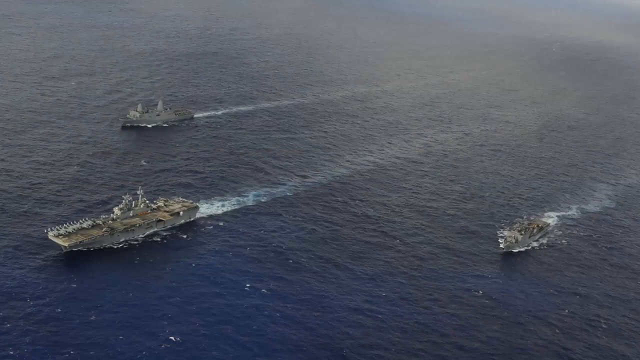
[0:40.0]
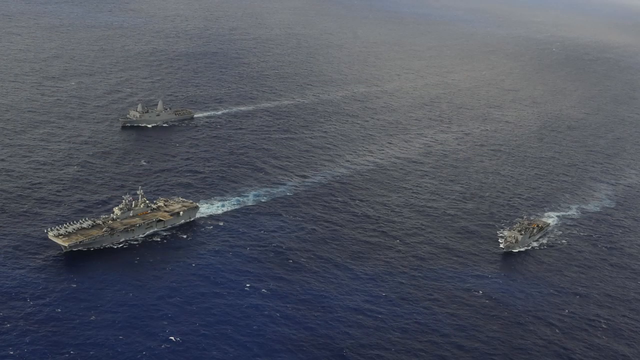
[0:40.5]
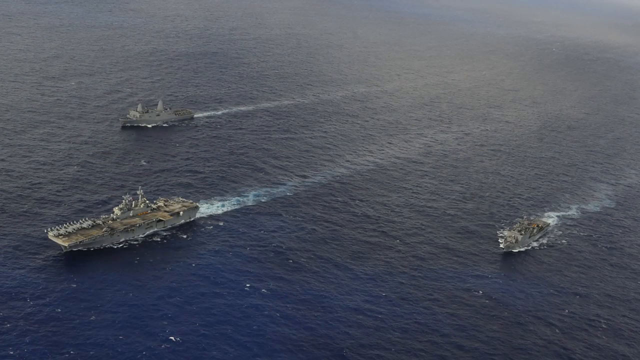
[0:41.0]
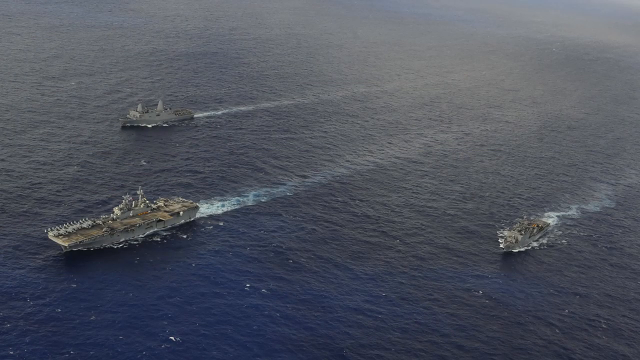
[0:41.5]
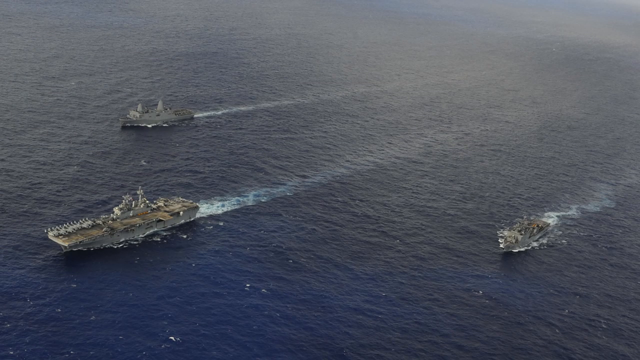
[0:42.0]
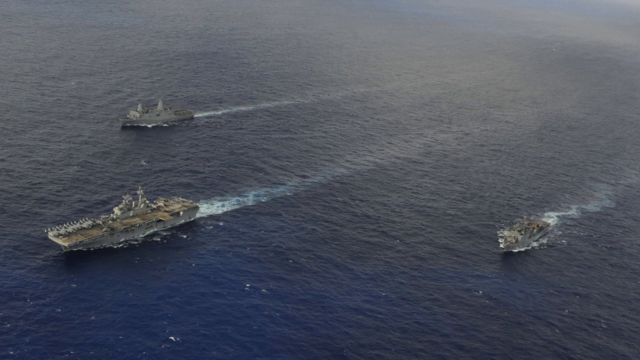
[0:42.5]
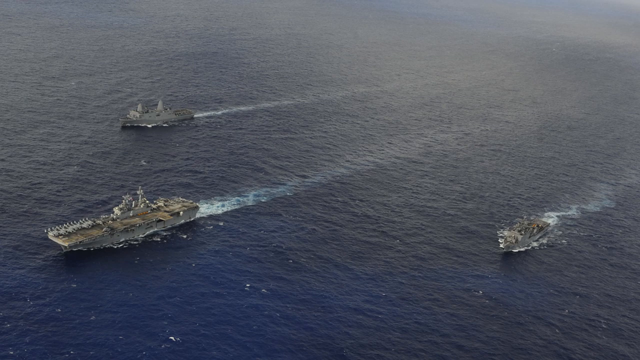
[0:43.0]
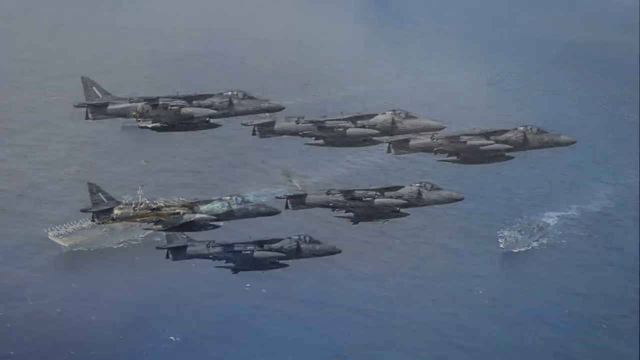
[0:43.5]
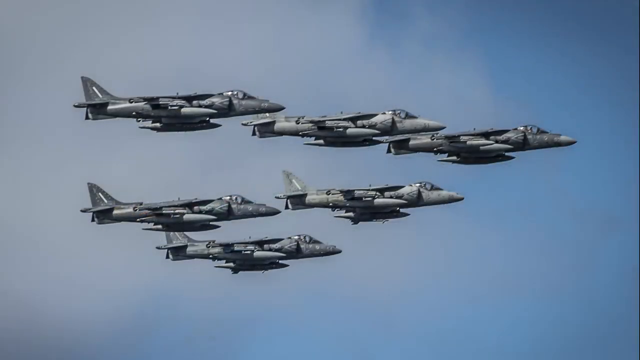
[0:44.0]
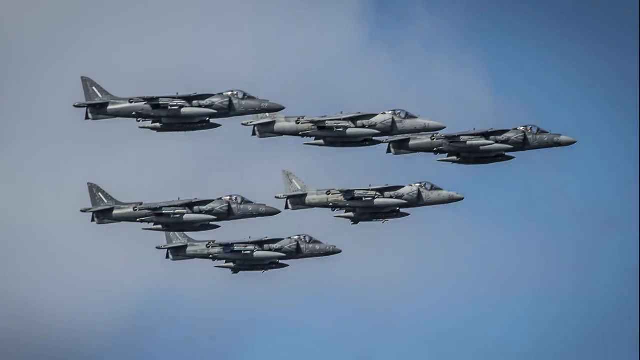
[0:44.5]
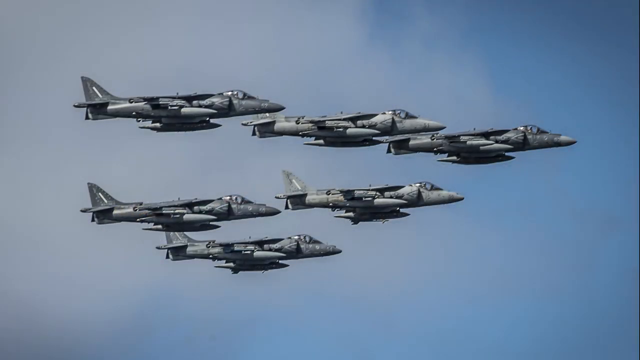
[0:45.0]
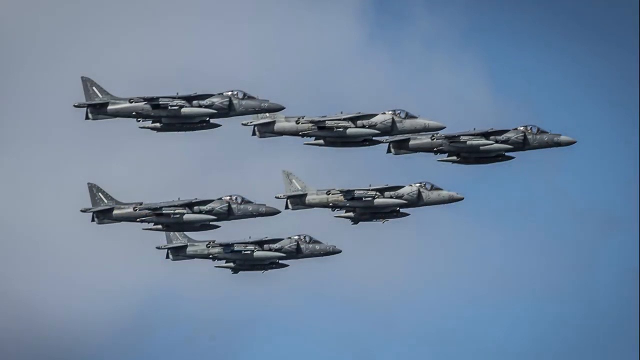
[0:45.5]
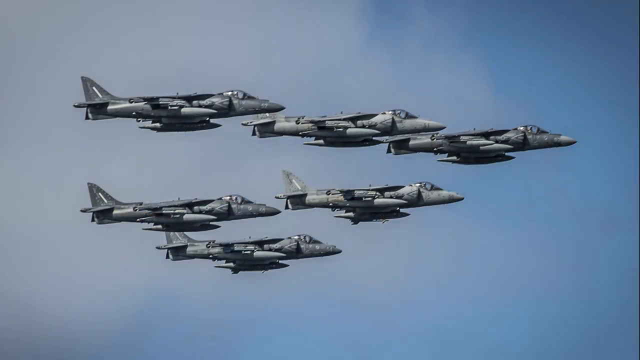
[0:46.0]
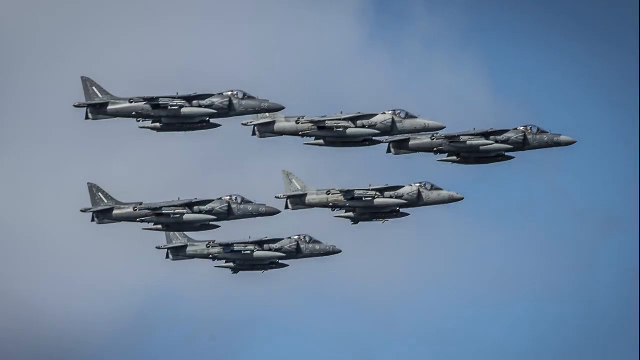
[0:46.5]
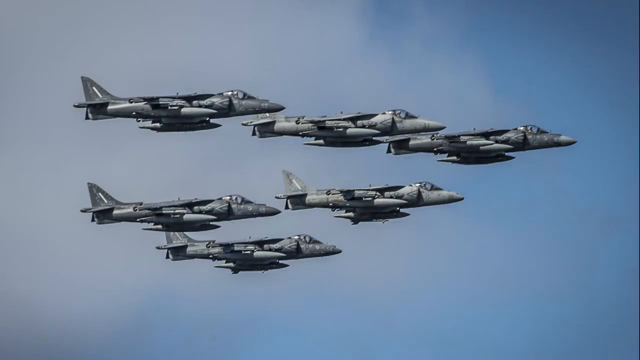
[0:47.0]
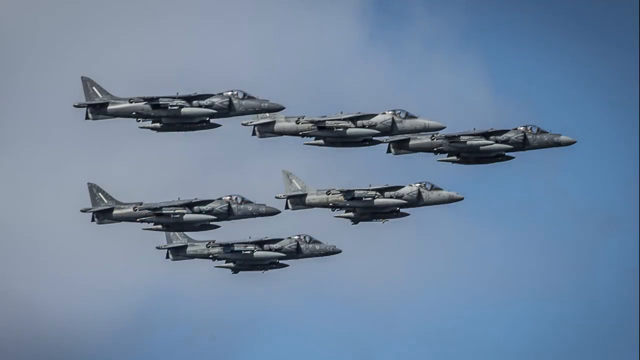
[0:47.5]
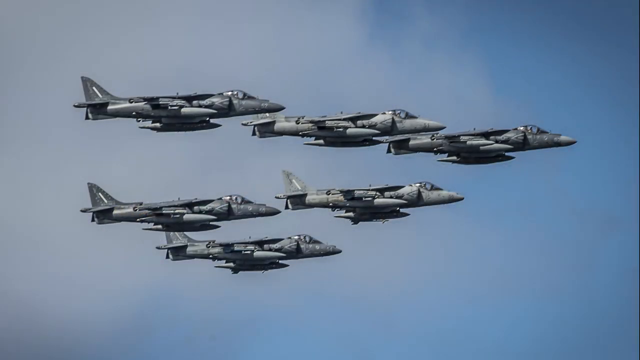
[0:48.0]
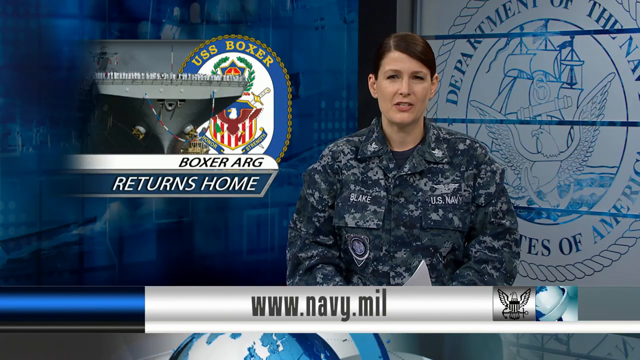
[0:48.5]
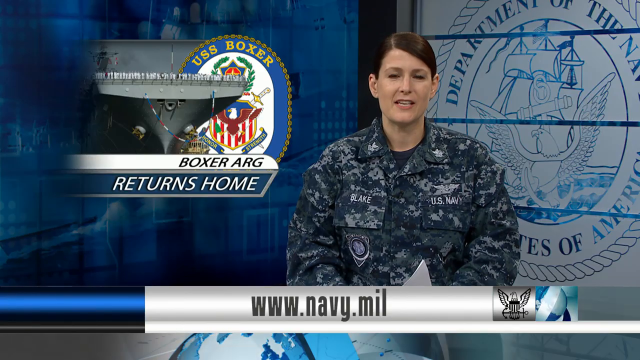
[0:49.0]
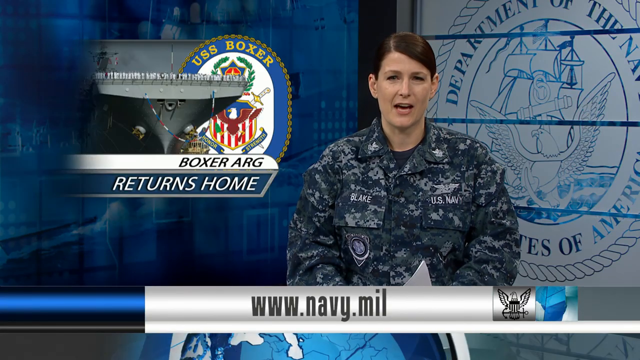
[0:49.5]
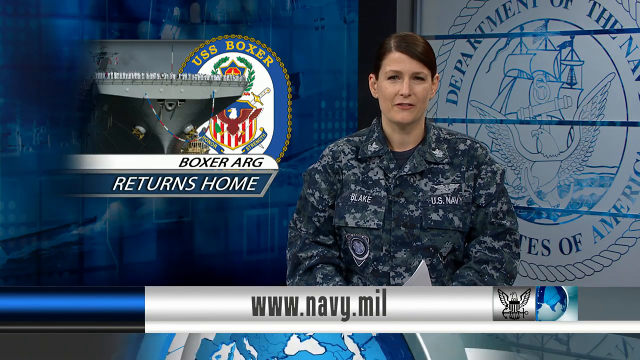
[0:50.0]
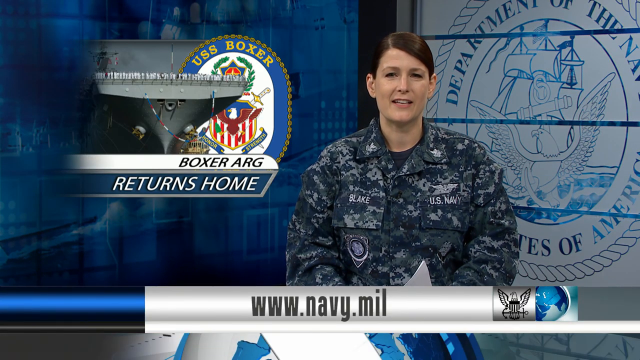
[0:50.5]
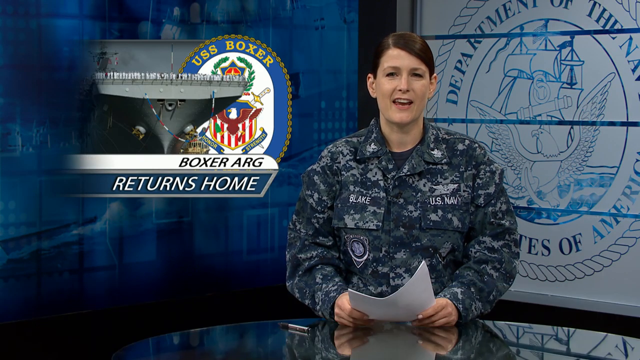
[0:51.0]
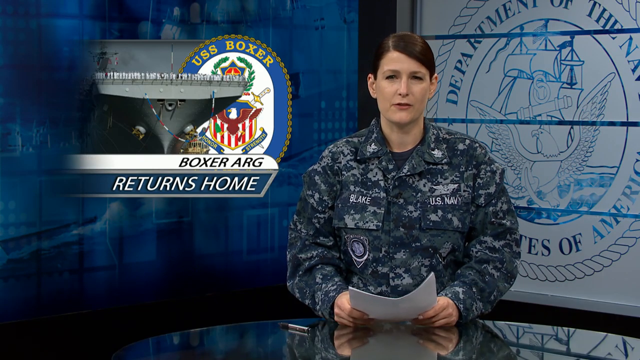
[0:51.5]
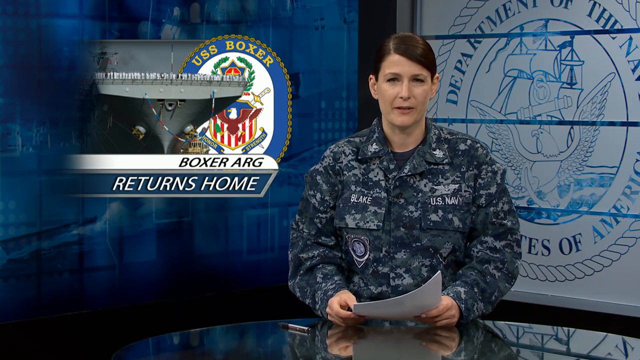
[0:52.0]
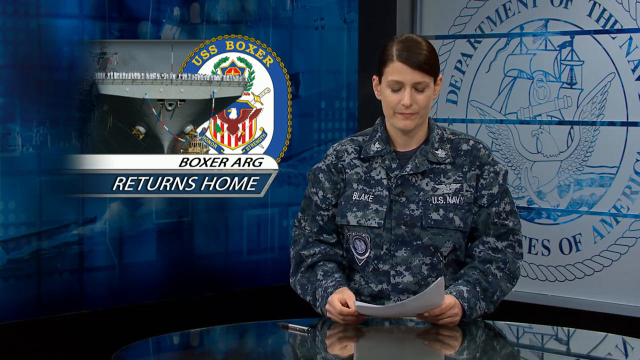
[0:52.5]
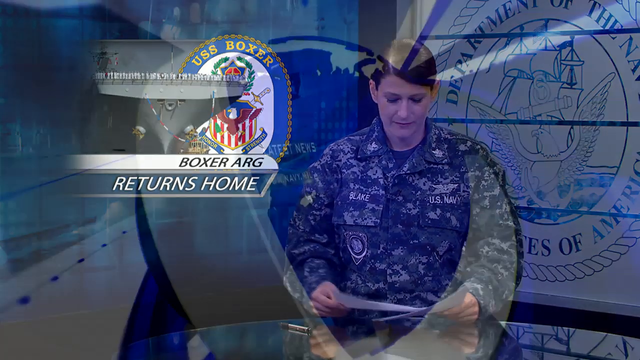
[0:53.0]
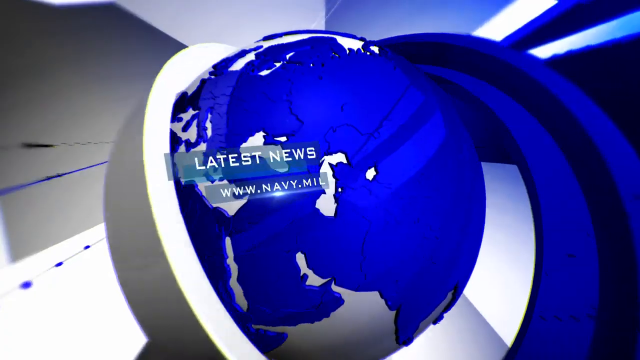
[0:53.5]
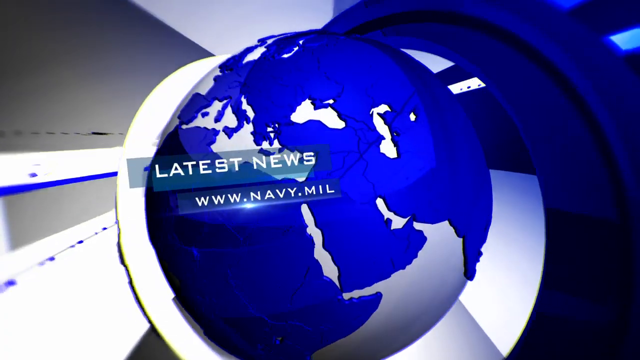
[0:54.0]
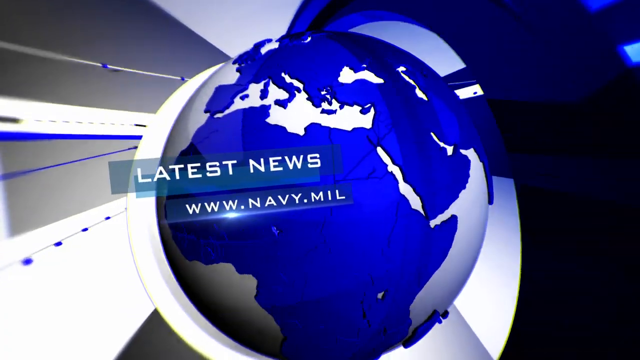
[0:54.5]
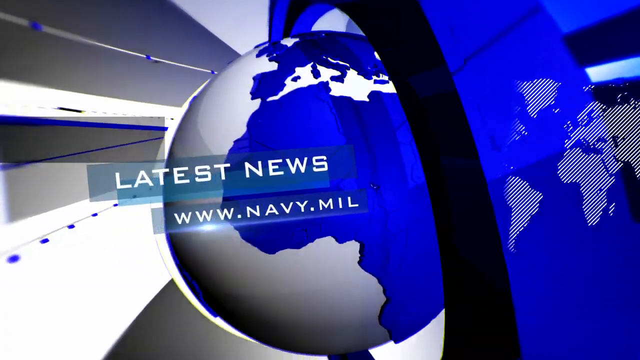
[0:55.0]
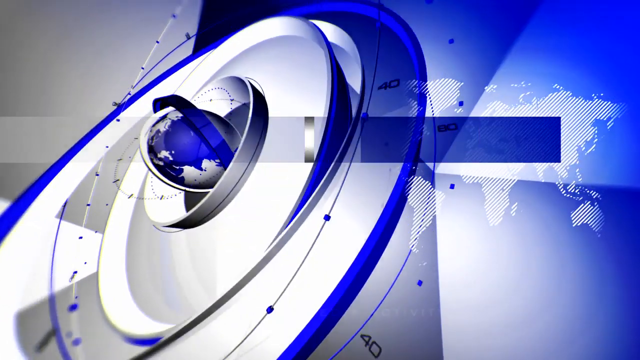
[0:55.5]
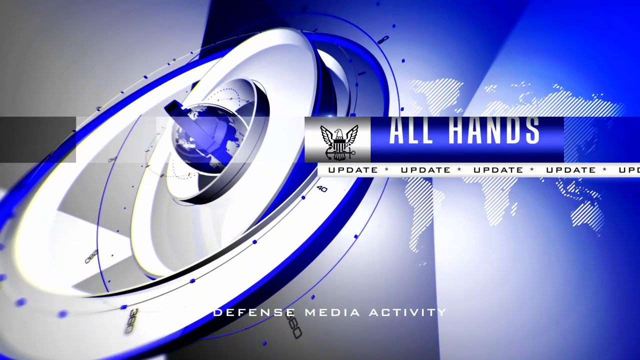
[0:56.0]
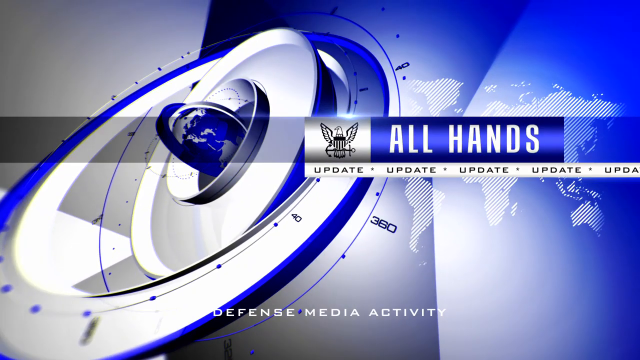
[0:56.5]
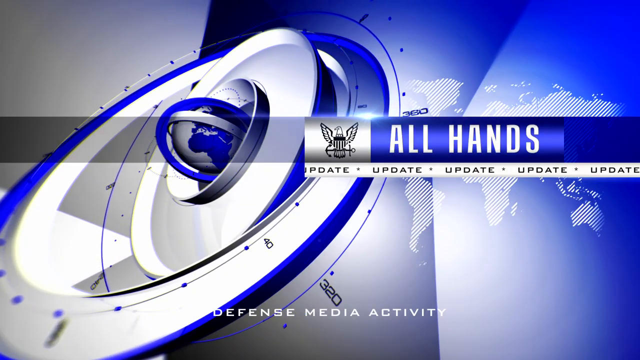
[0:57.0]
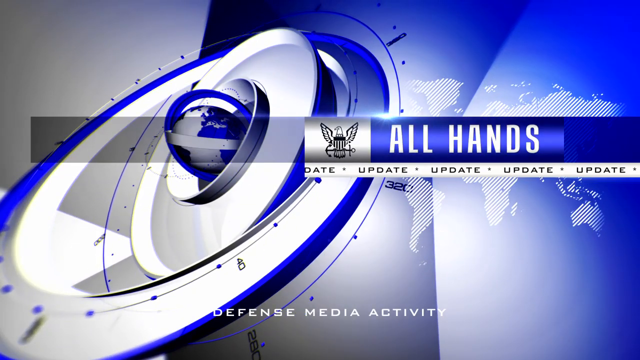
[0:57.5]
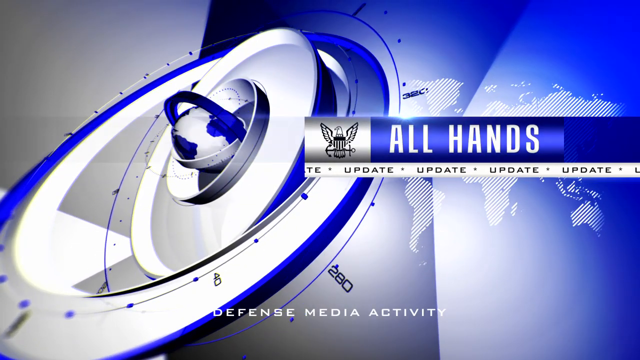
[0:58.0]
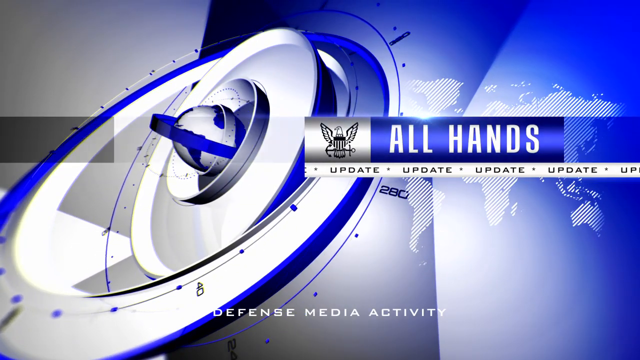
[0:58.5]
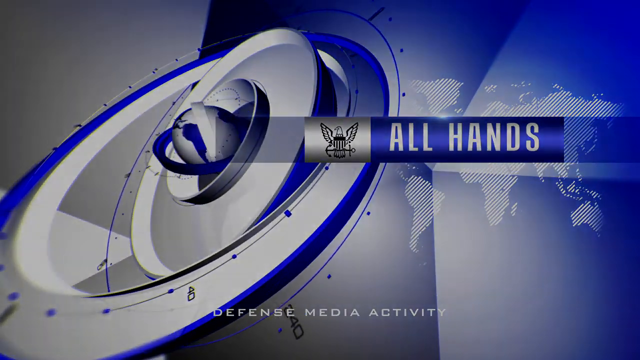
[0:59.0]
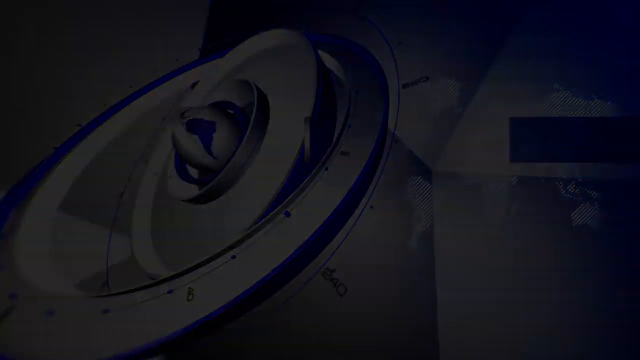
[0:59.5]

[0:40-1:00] A banner is in the top right. There is a picture of a woman in the U.S. Navy in front of a blue background, with "Department of Defense" partially visible. A graphic on the left indicates USS Boxer, "Boxer Returns Home", and a banner across the middle of the video carries "www.navy.mil". This suggests a news segment from official U.S. Navy media about the USS Boxer returning home. A red and white cable is visible on the right side of a big ship carrying many Marines in white uniforms, and shields are visible. Two boats move through the water on the ocean, leaving waves behind them. Marine airplanes fly in the air.